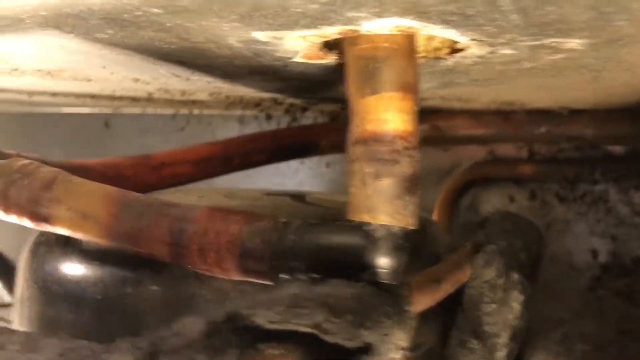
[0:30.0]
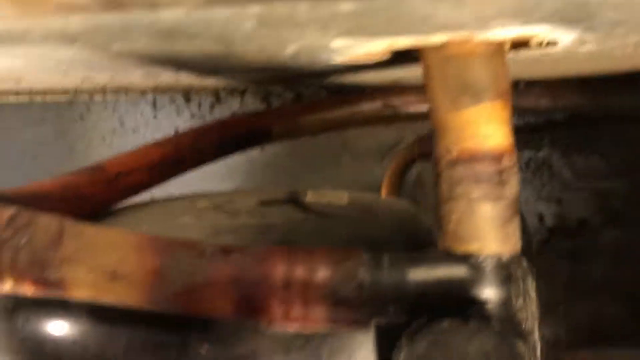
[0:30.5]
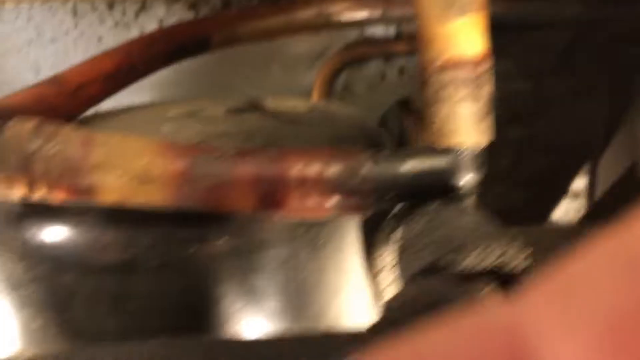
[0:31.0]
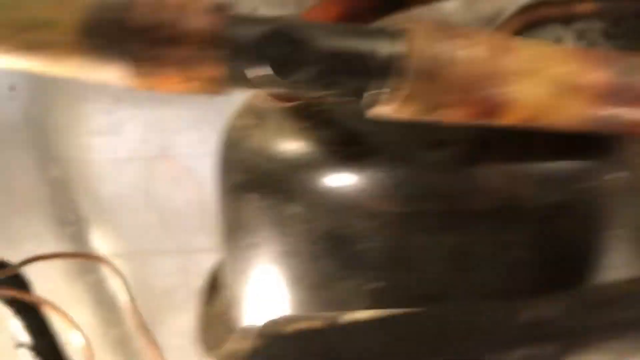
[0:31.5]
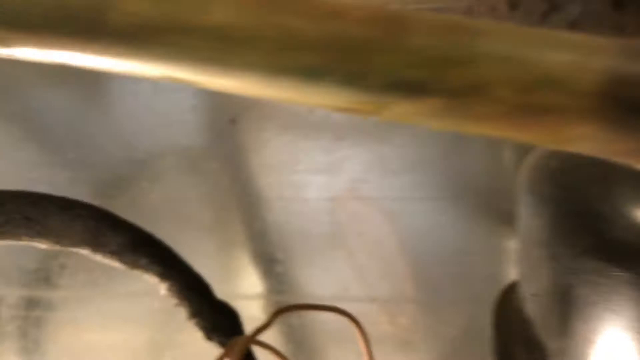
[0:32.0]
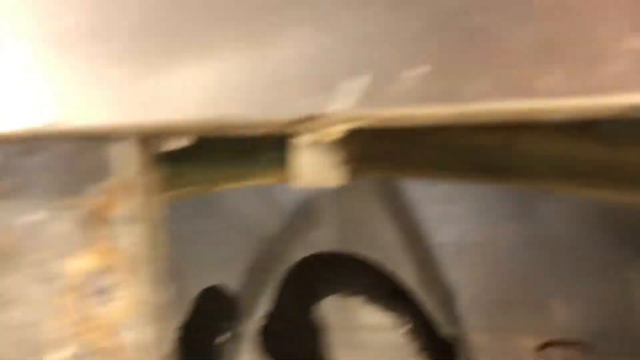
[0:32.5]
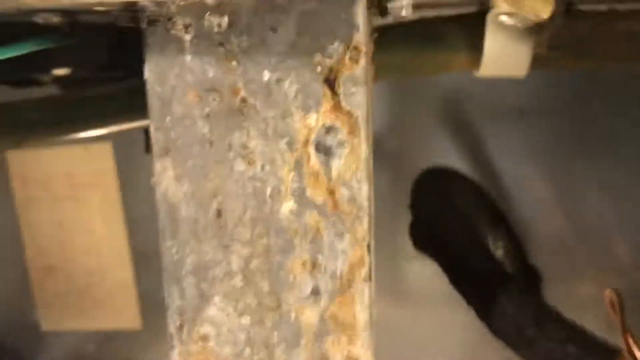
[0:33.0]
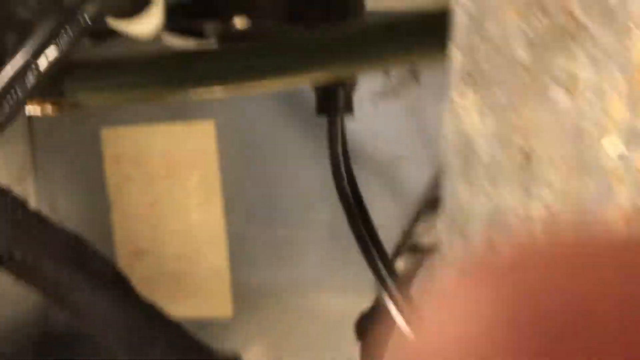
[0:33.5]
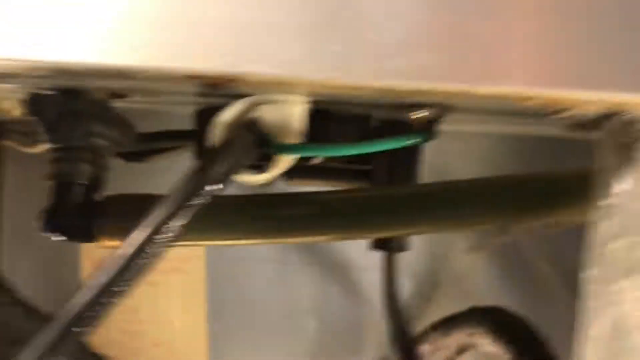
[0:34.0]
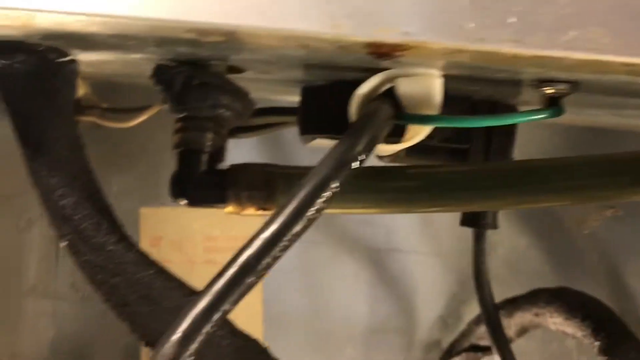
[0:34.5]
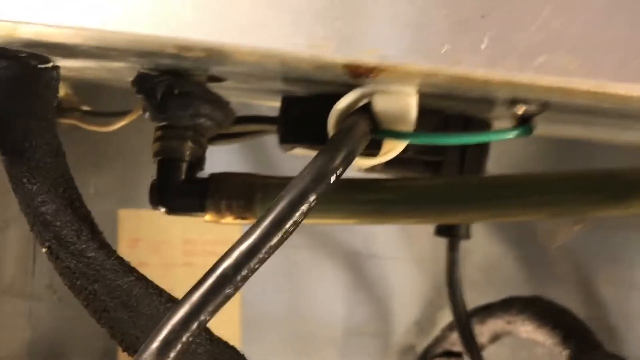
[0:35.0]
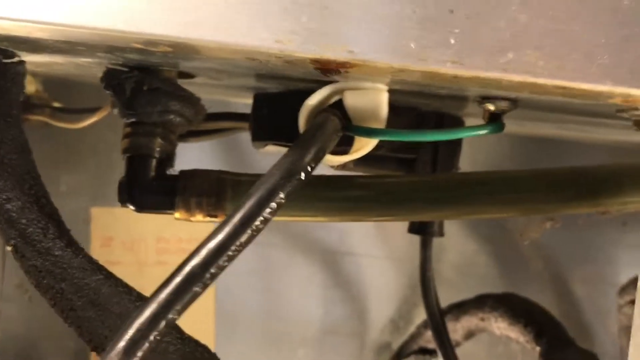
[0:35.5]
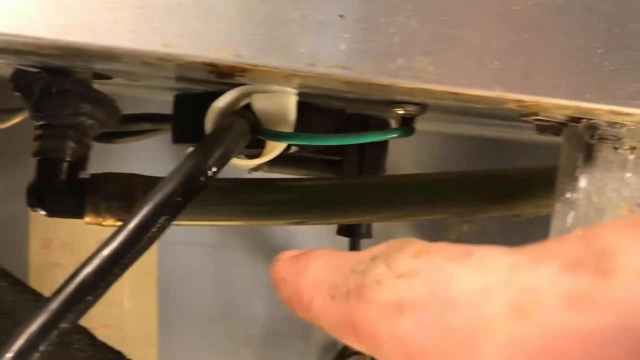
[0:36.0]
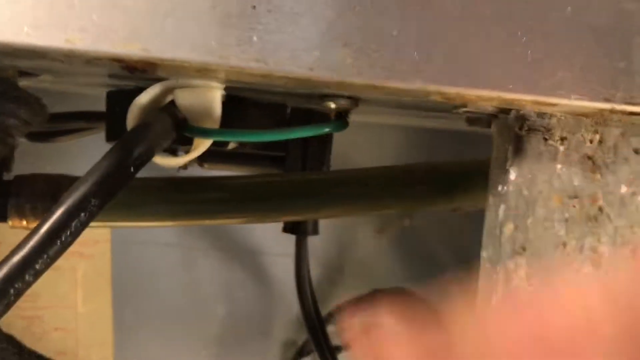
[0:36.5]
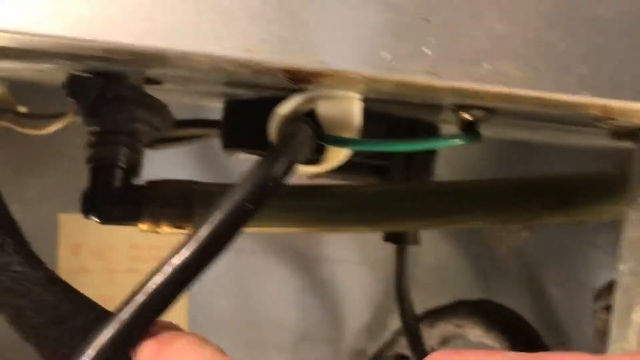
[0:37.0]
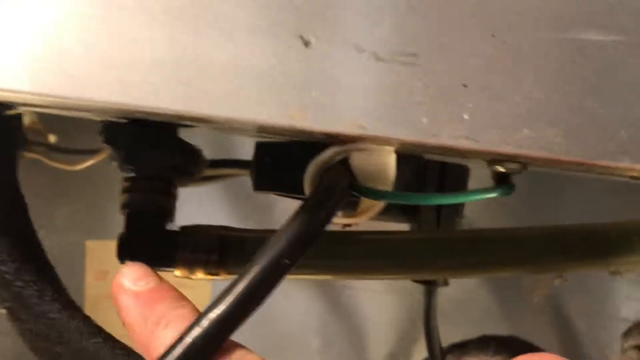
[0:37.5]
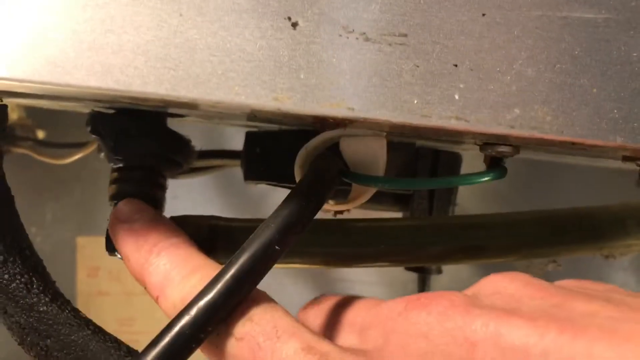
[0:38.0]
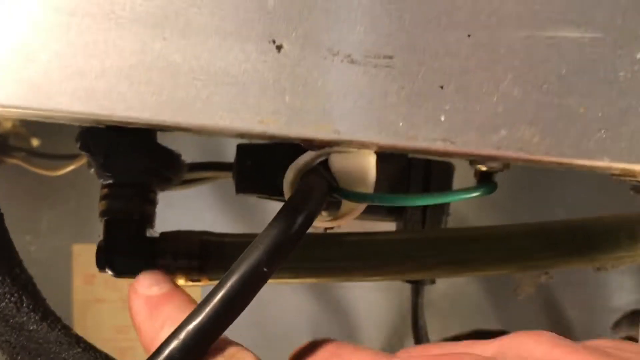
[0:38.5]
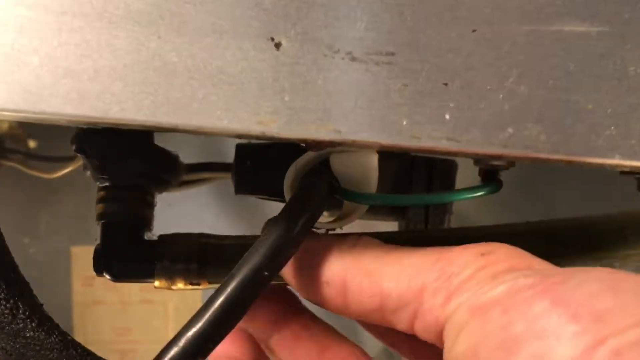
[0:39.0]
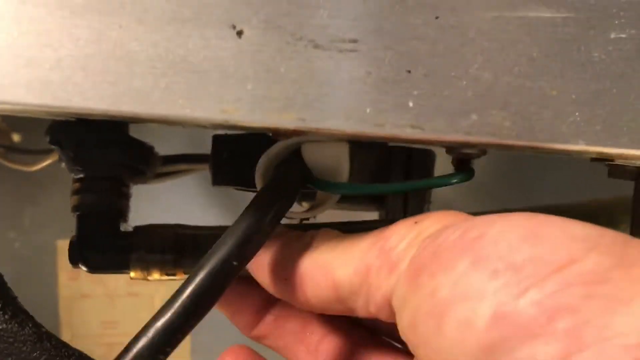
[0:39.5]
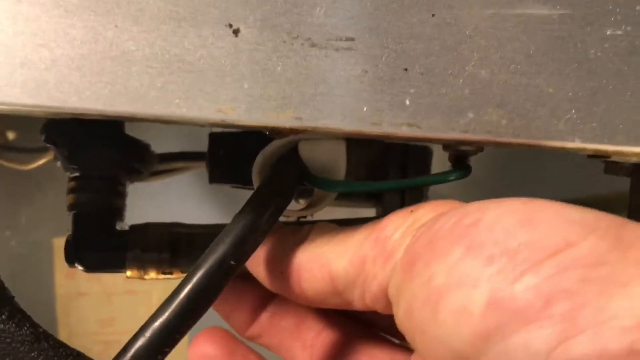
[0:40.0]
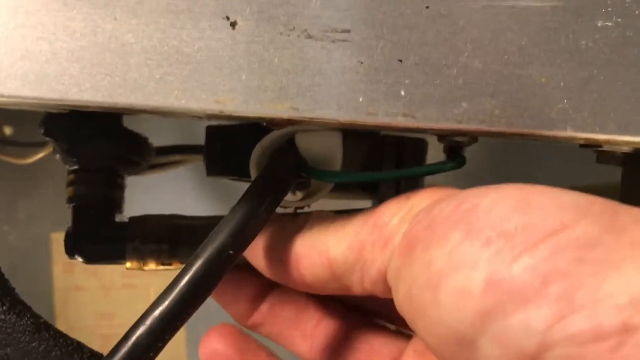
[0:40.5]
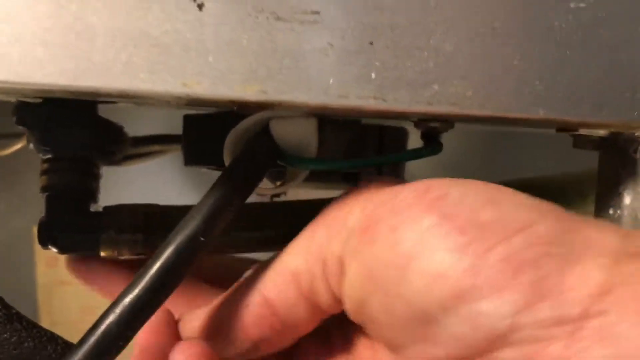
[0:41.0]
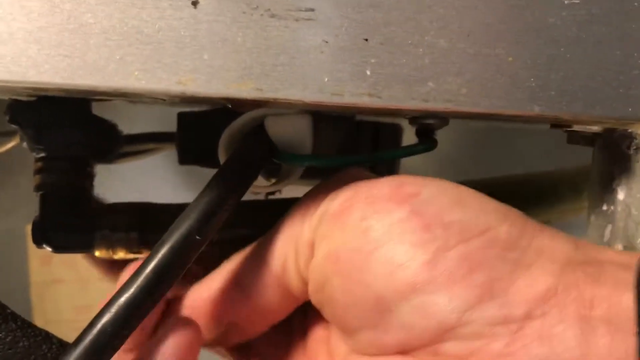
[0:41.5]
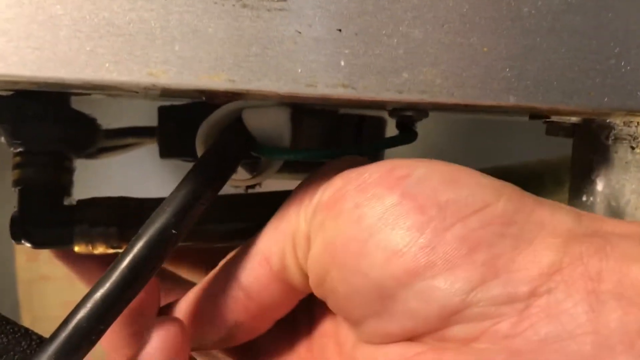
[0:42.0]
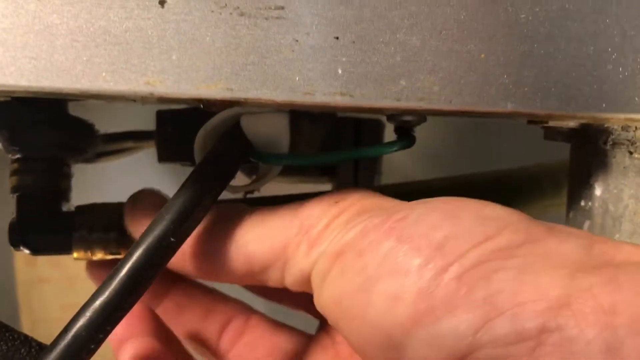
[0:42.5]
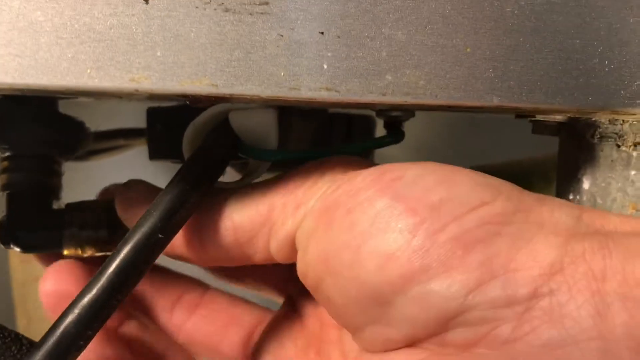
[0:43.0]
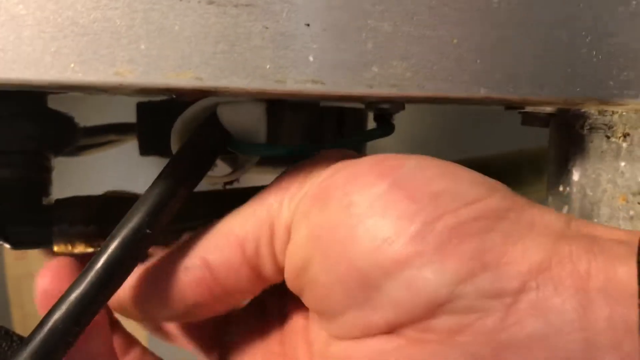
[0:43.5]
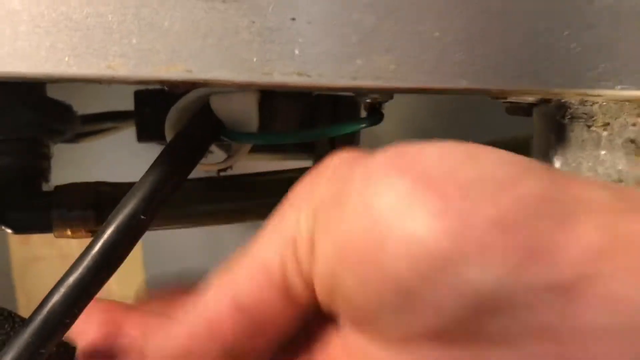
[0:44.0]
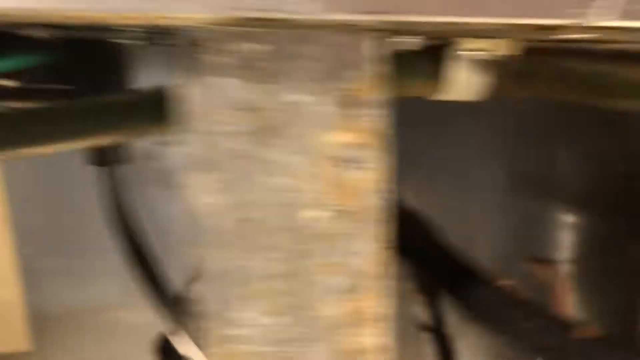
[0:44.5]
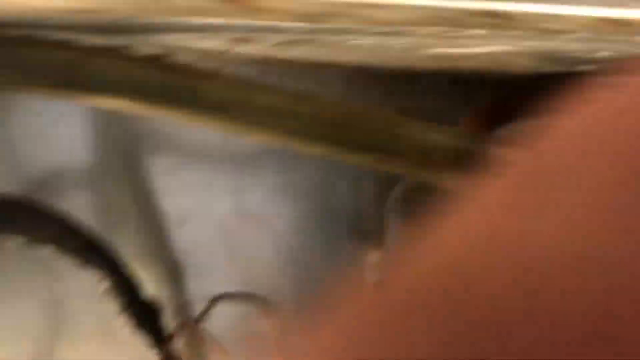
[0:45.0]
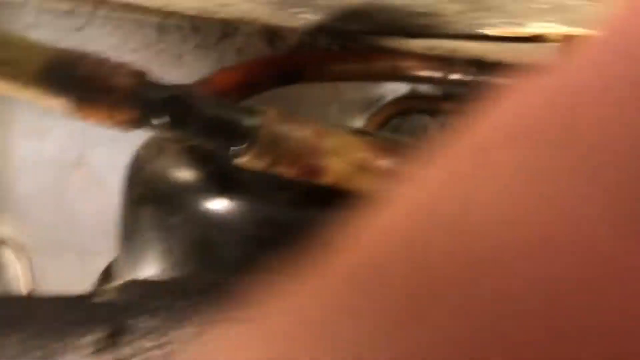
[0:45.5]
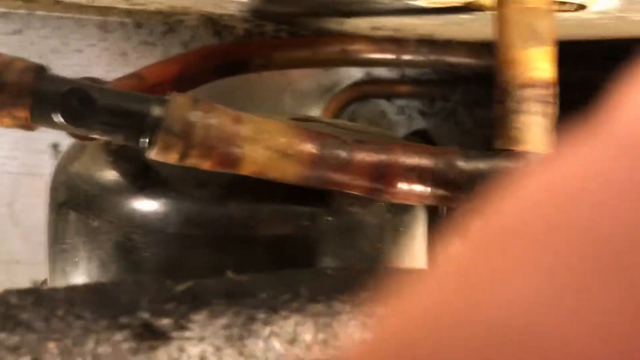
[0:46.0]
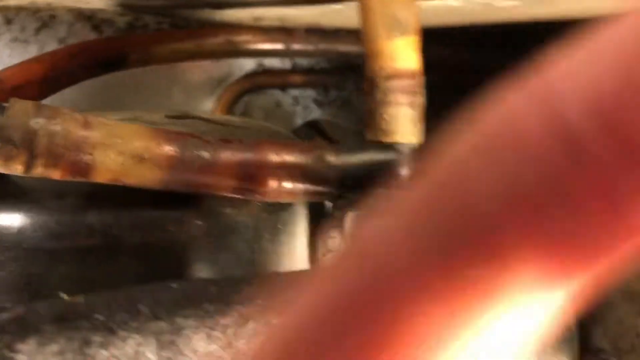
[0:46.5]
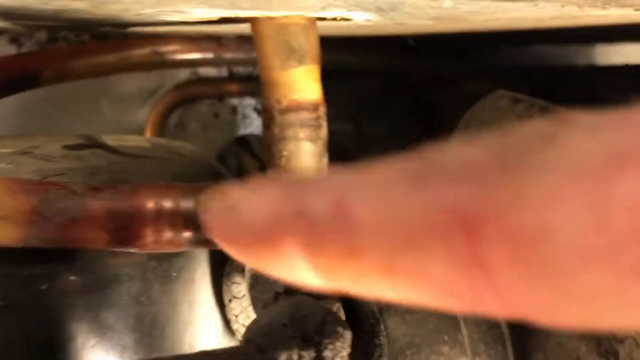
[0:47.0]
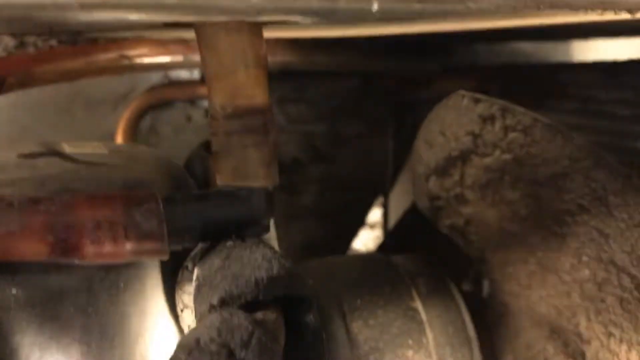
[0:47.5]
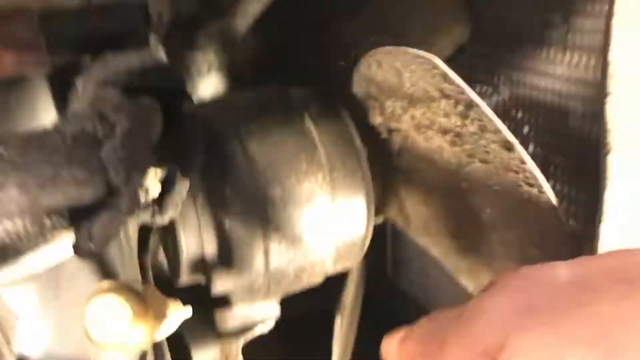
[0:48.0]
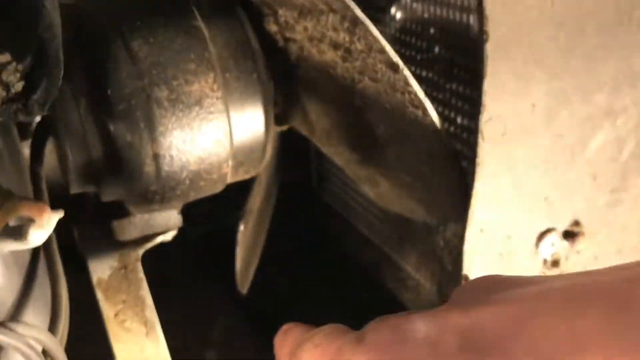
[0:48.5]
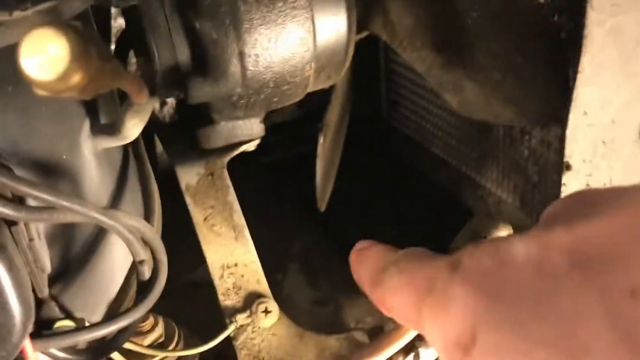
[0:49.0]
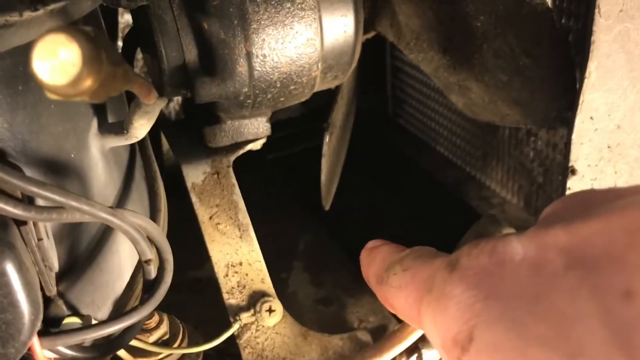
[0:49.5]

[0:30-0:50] More angles of the pipe and the black cylinder are shown. The camera pans left, following one of the pipes, which has a green shade to it, to another area where it goes up and into the metal or concrete-looking floor. A green wire above it connects to another pipe. The man points his right pointer finger toward the area that goes up into the floor or roof of the machine. He then puts his hand underneath the wire and wiggles it a little, making sure it is intact and in position with the pipe. He pans the camera back to the right, then down below the black cylinder and the other pipes, where another fan is visible, not moving. He points his finger down below the fan.